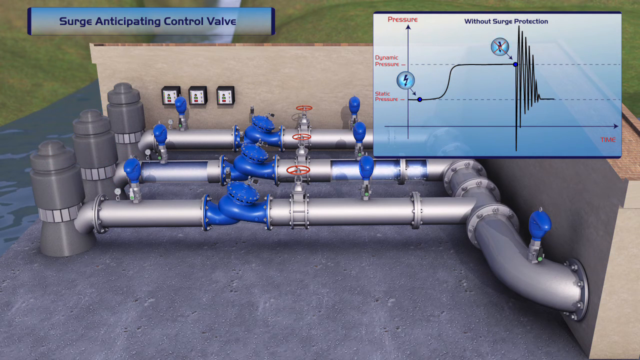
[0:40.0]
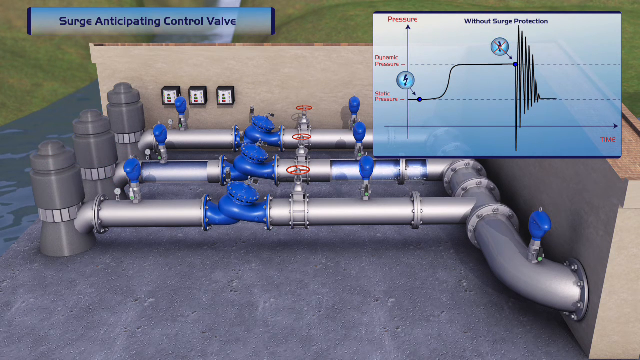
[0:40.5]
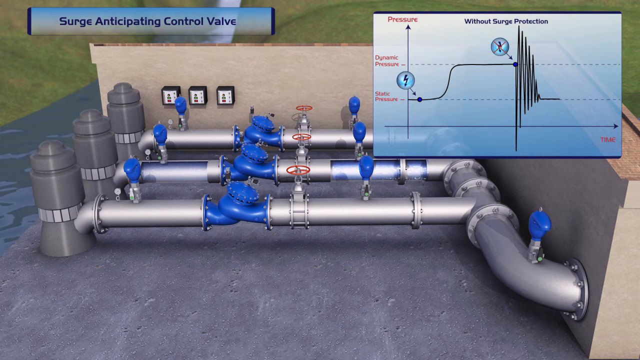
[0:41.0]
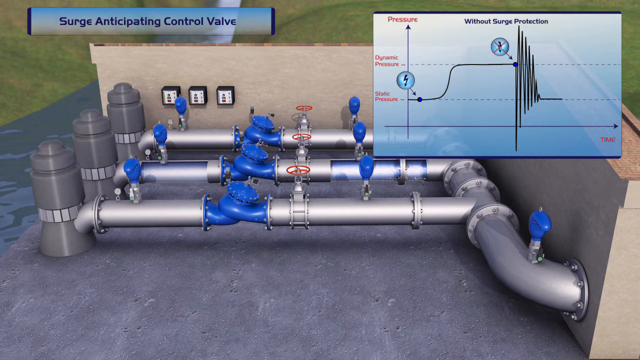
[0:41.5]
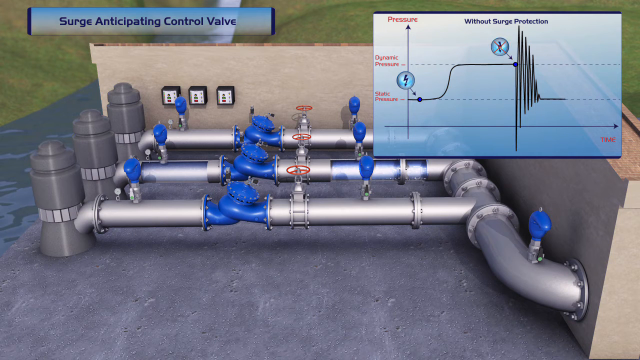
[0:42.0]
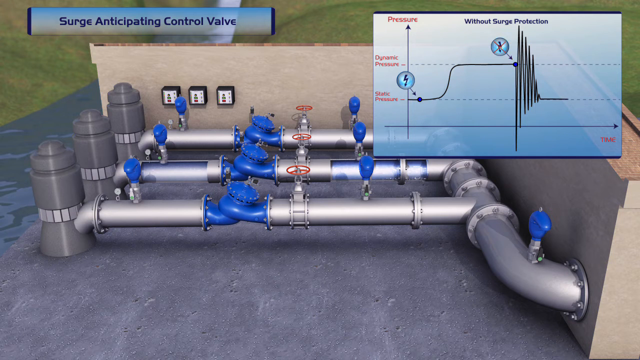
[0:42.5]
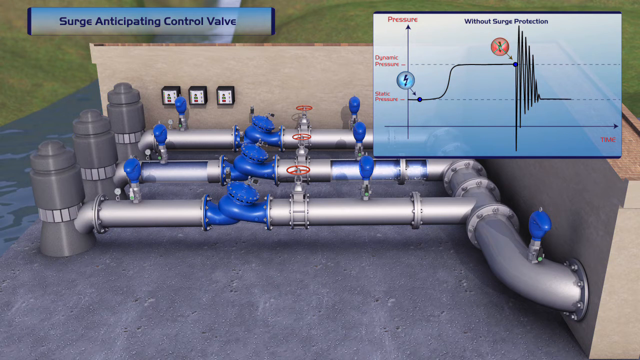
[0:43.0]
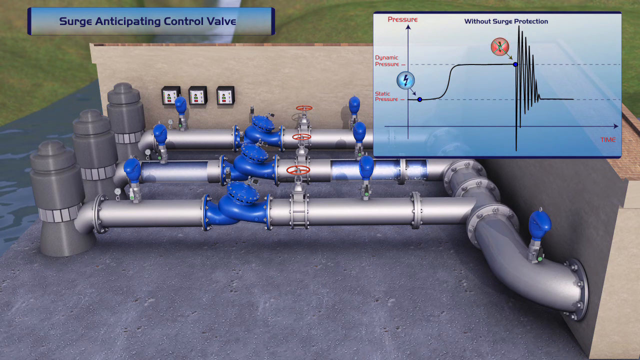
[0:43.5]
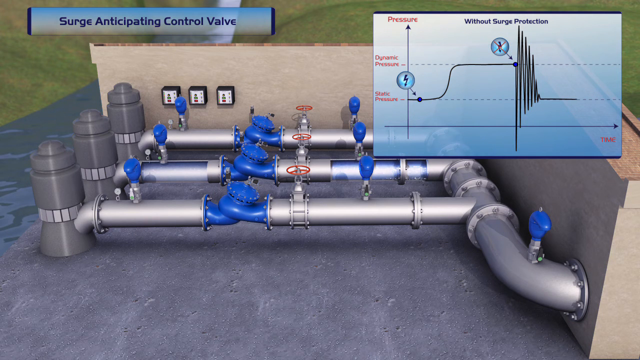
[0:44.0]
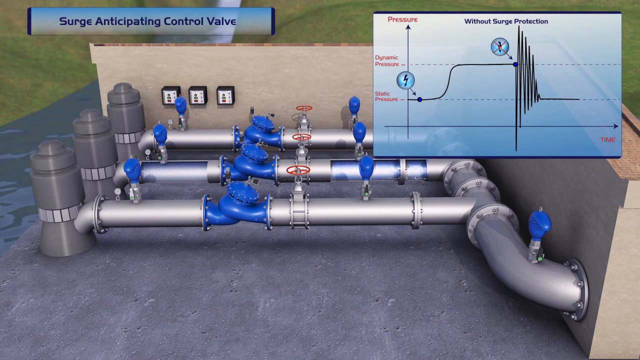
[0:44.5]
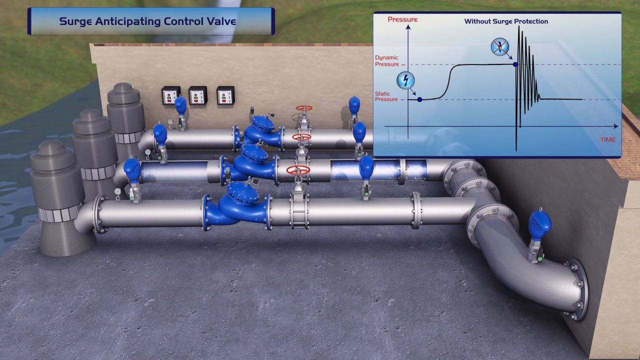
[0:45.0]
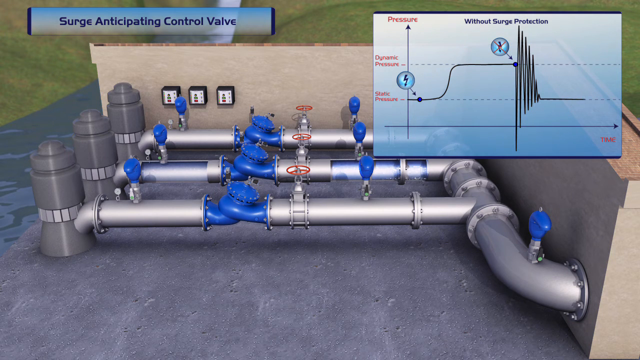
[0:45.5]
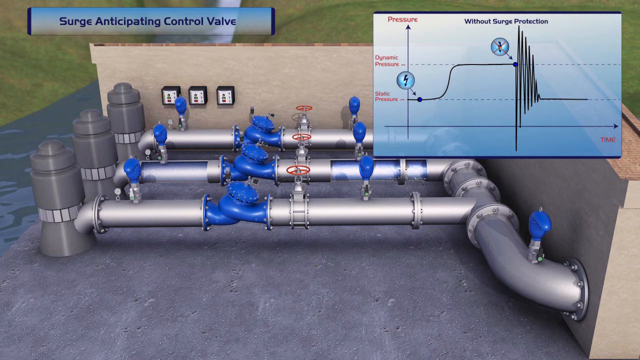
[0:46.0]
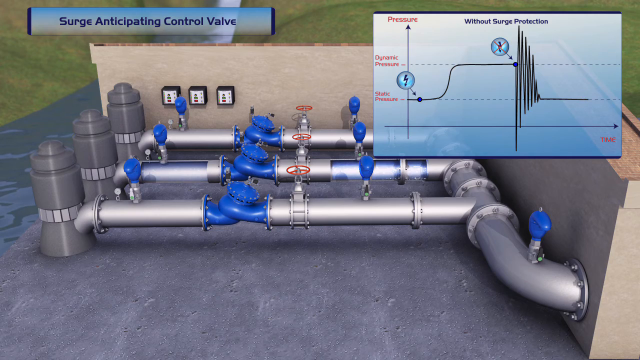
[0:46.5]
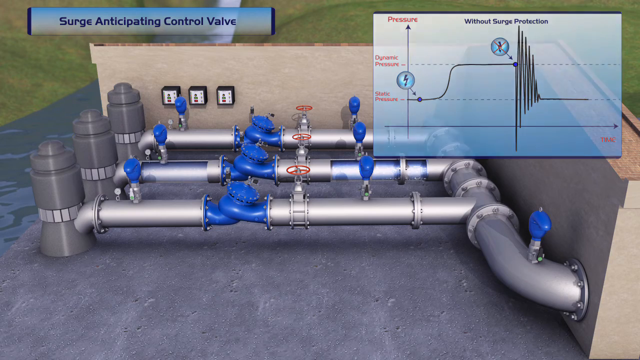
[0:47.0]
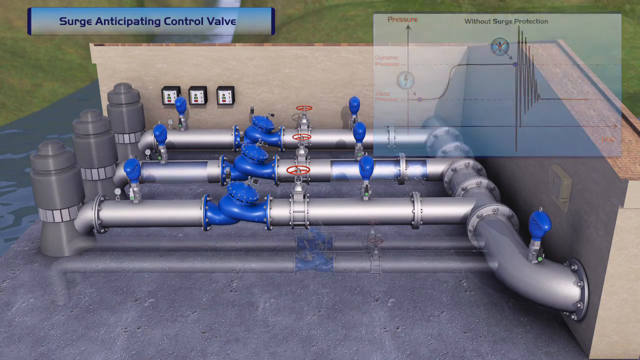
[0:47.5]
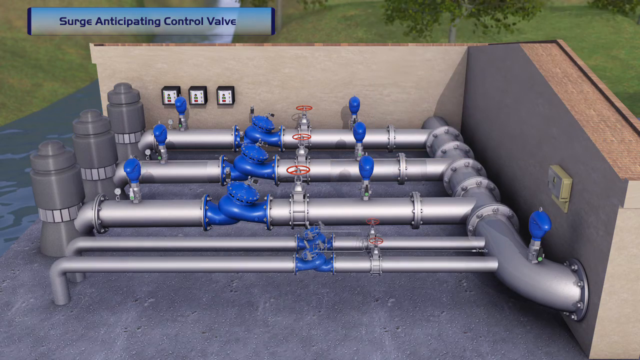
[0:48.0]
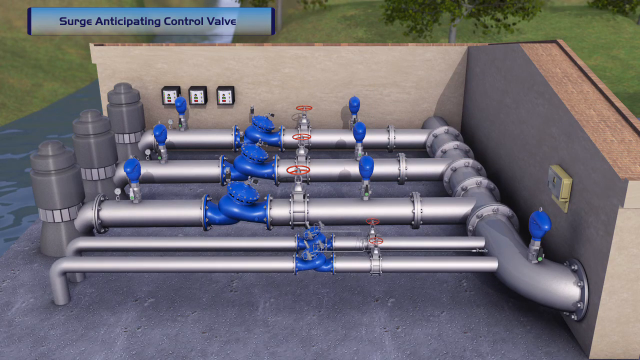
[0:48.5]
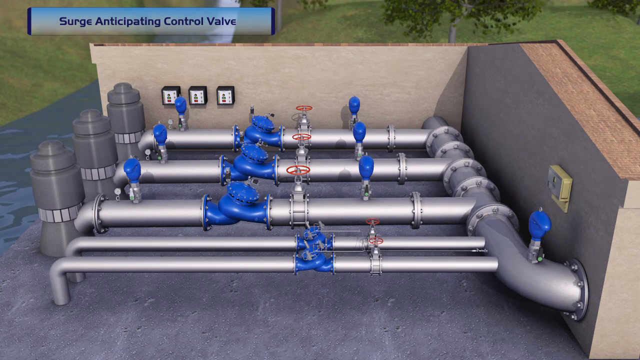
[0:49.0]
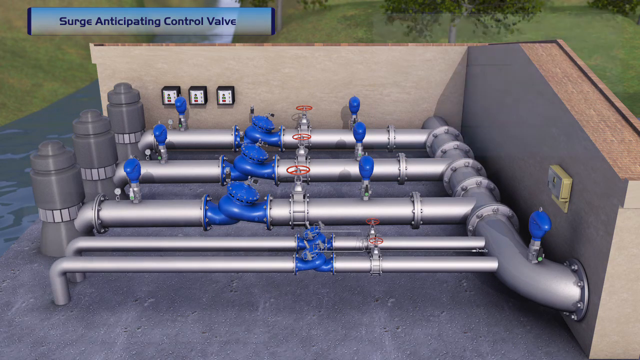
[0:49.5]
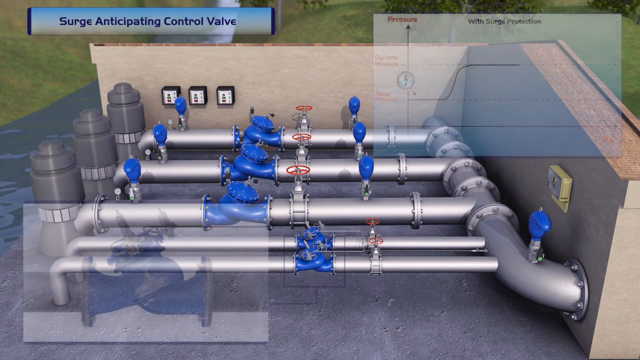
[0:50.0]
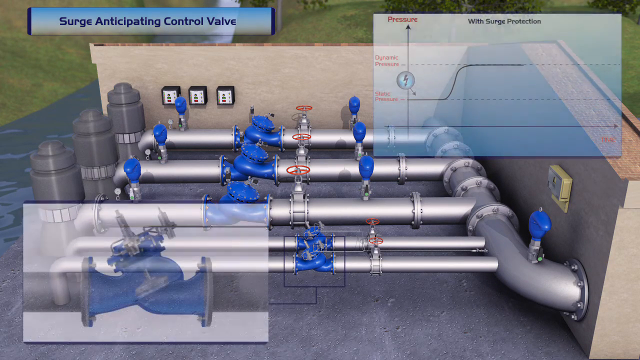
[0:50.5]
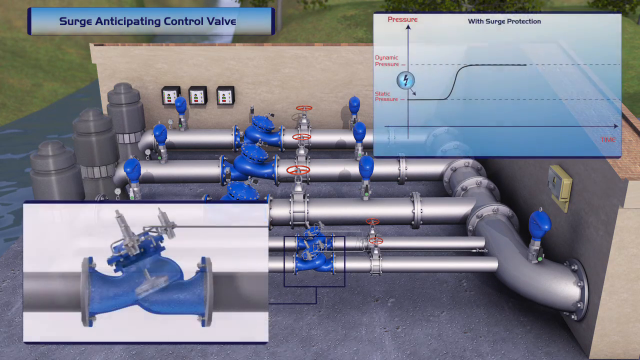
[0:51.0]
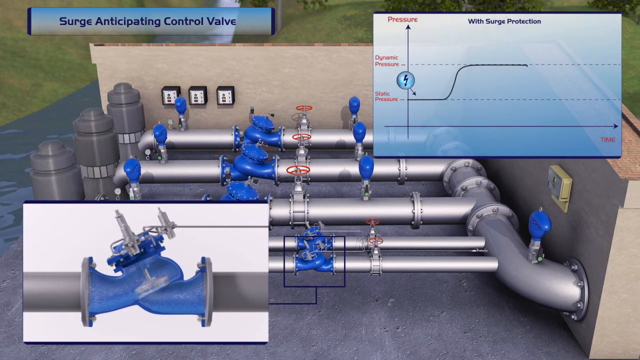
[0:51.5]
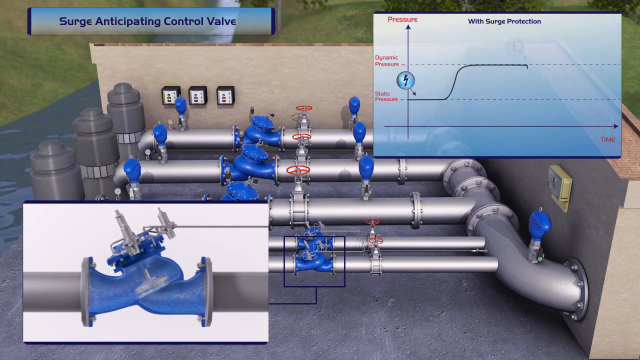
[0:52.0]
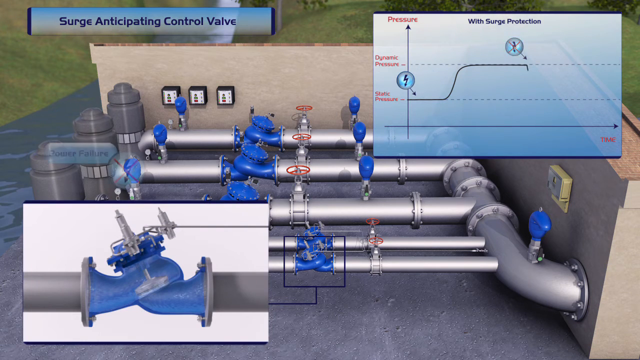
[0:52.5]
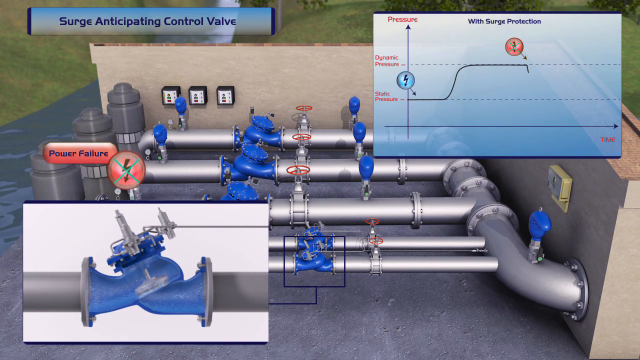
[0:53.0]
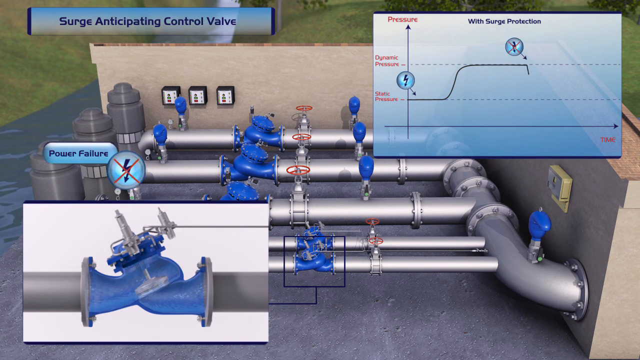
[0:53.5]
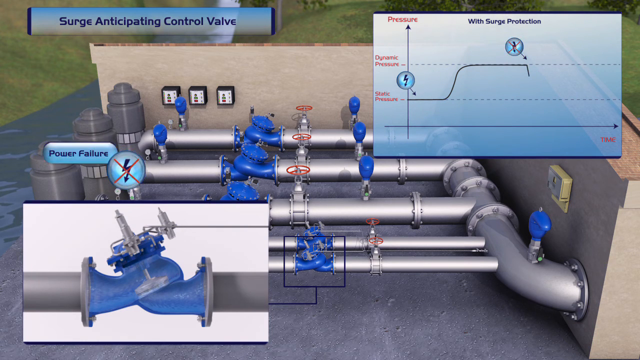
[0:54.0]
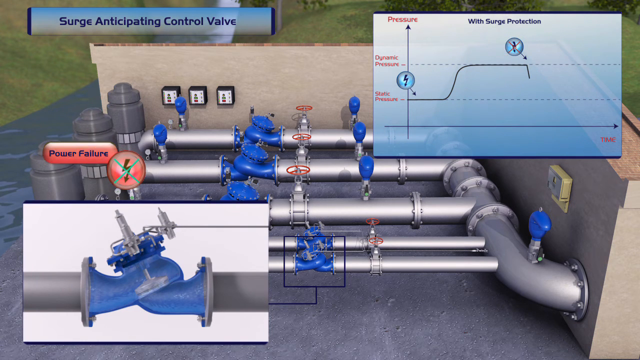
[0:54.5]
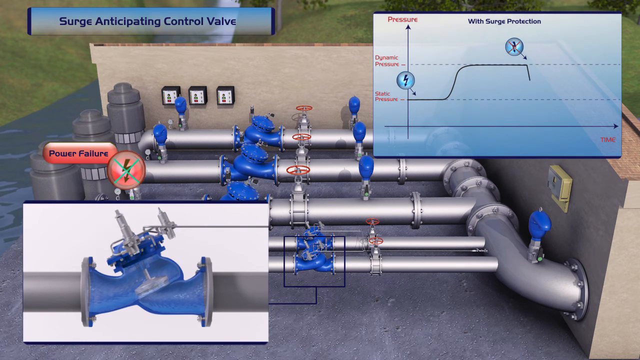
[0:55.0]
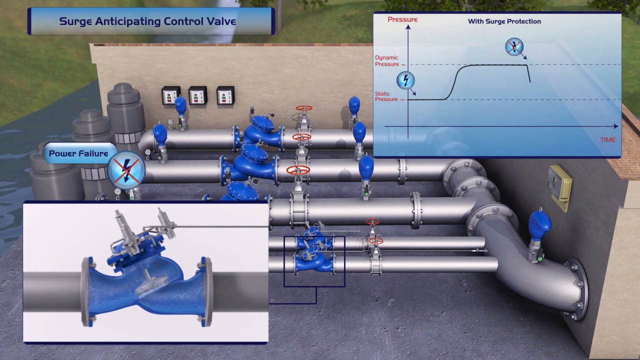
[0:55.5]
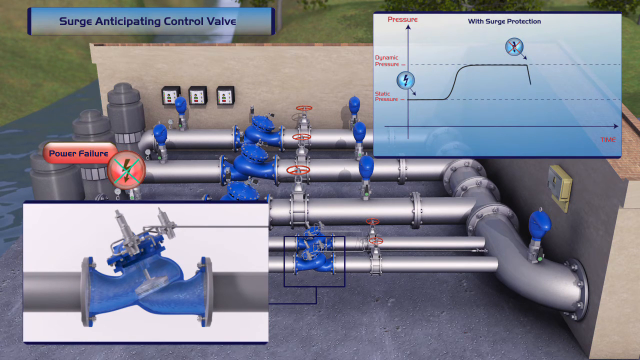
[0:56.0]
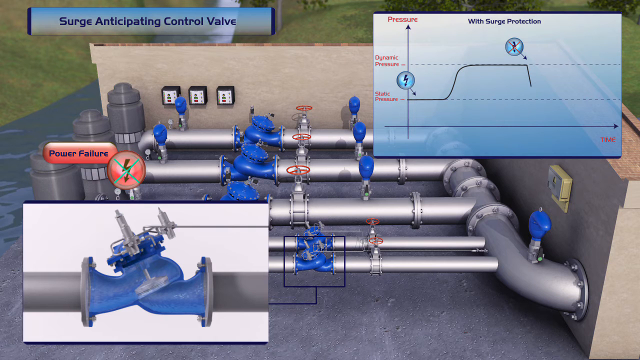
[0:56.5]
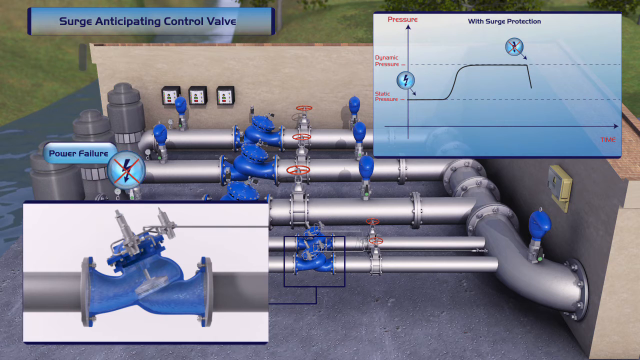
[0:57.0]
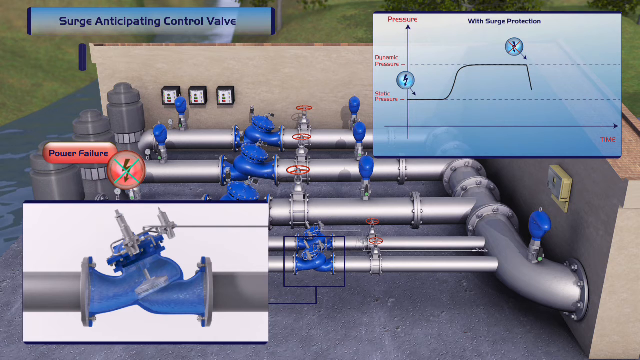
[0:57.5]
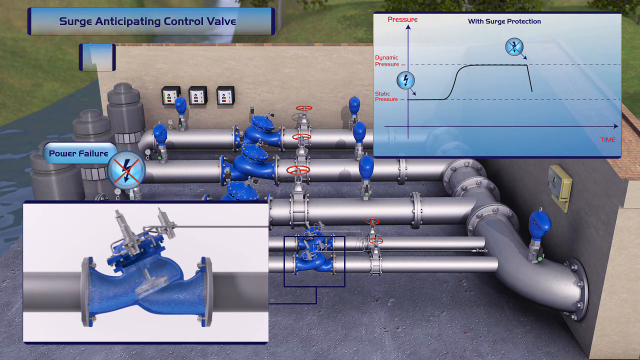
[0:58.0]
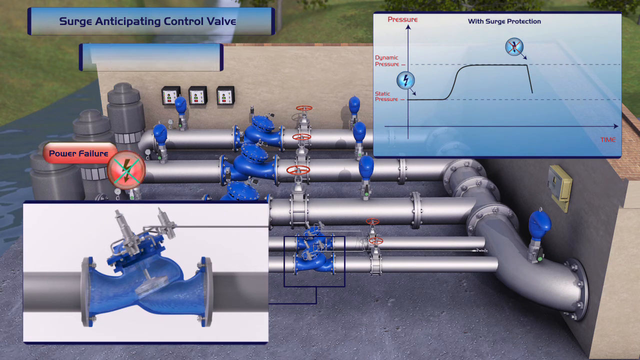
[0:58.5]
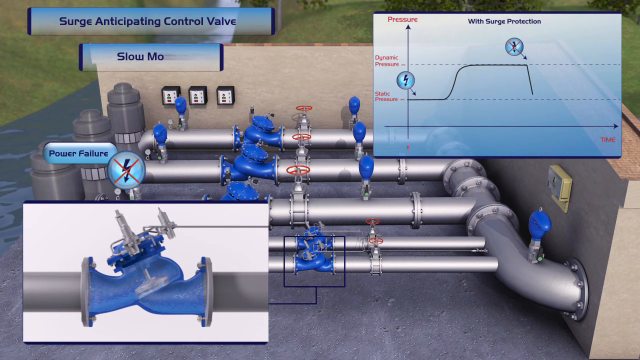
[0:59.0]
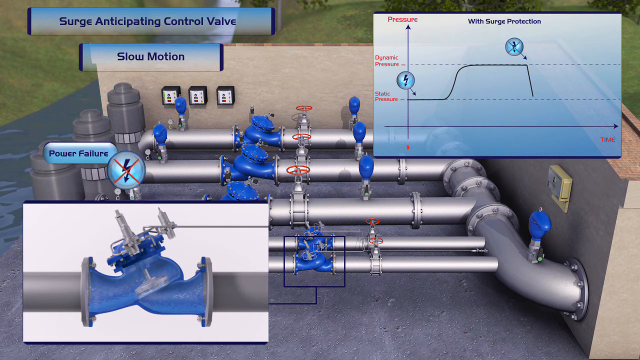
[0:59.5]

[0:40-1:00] The same front view of a system of pipes on the bank of a river is shown. A blue banner in the upper left says "surge anticipating control valve", and to the right is a bar graph titled "without surge protection" with two horizontal dotted lines: the top labeled dynamic pressure and the bottom labeled static pressure. The line has started on static pressure, moved up to dynamic pressure, and then zigzagged in a kind of triangular, descending zigzag back down to the static pressure line, and that line grows longer. The bar graph then disappears from the screen but comes back up with a different line: it goes from static pressure, dips down a bit, and then curves up to dynamic pressure. In the bottom left of the screen is a close-up of one of the center valves on two pipes in front of the original three pipes. These pipes are smaller in diameter and their blue center valve is smaller, but it looks like it is configured in basically the same way; the close-up shows that blue, kind of curved valve. A bar then appears in the center left that says "power failure", flashing blue and red, and next to it a circle with an electric thunderbolt symbol with a green X over it, also flashing blue and red. Another banner appears under the title banner on the left-hand side, saying "slow motion".